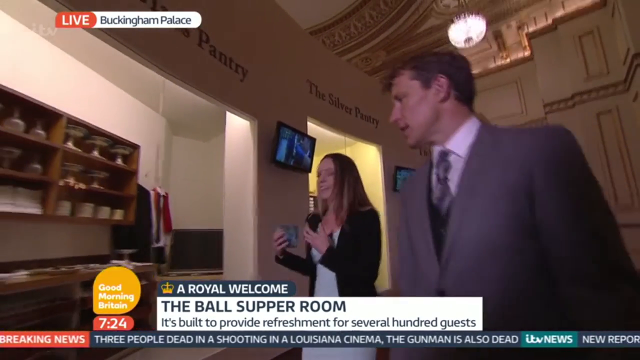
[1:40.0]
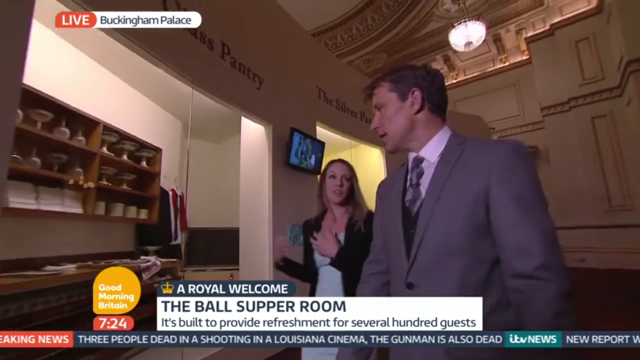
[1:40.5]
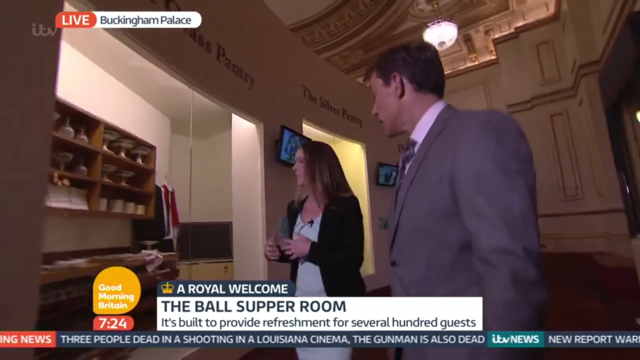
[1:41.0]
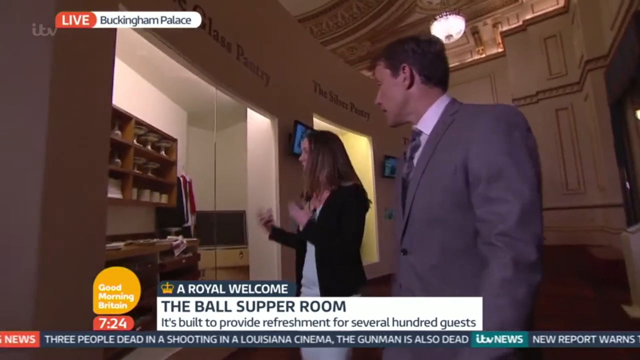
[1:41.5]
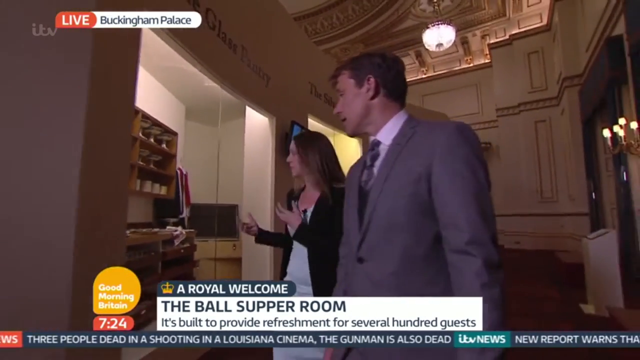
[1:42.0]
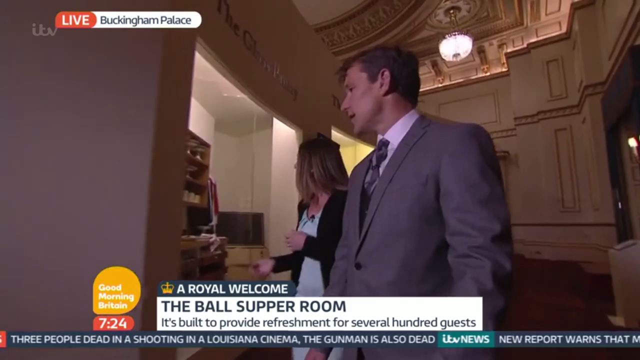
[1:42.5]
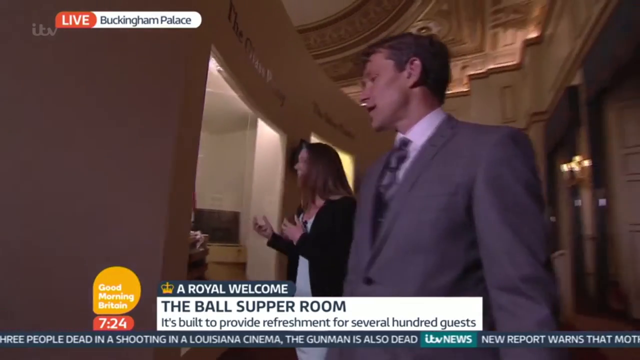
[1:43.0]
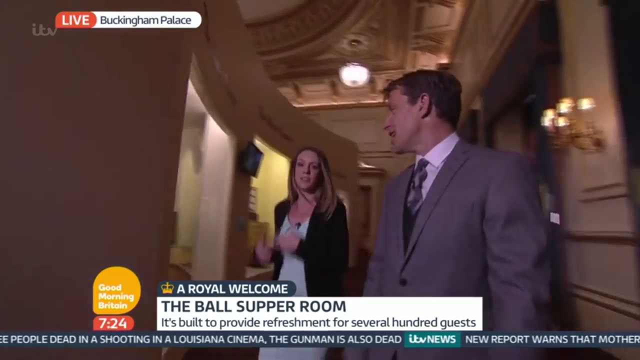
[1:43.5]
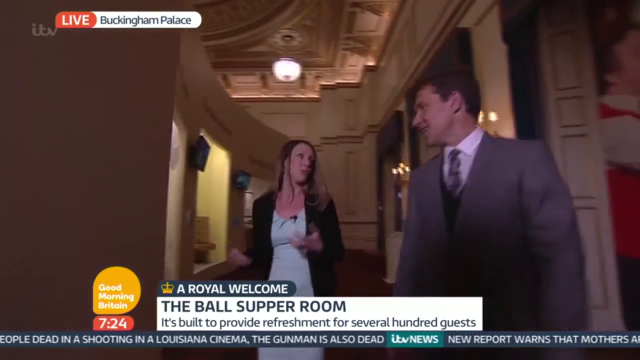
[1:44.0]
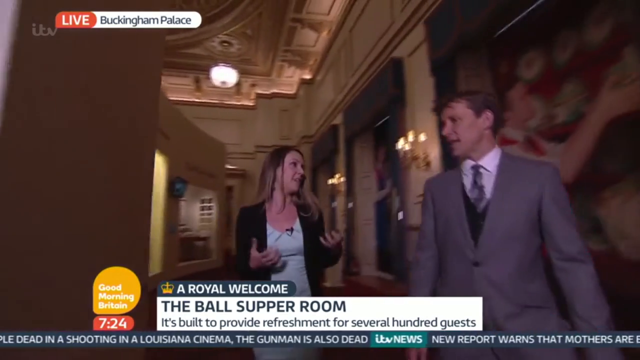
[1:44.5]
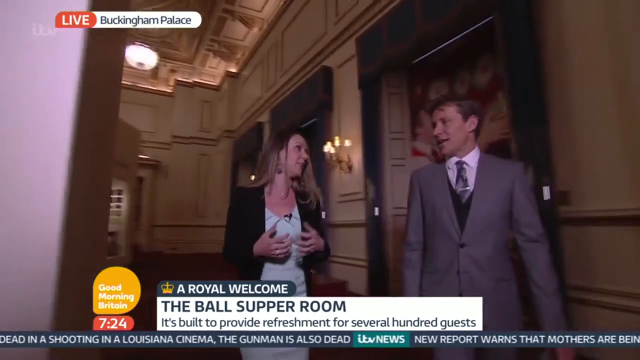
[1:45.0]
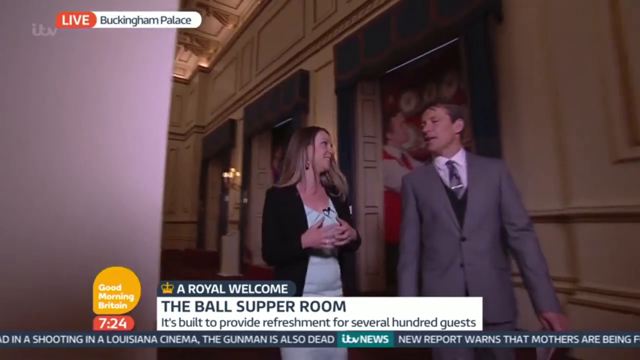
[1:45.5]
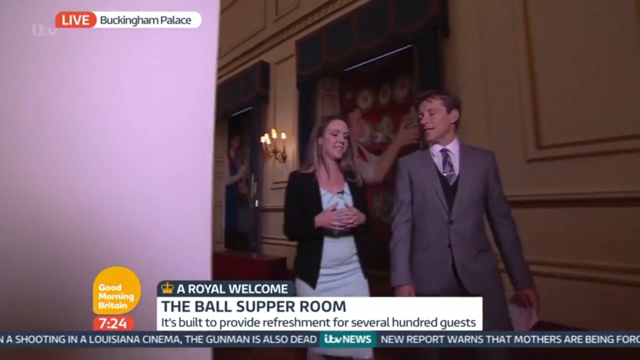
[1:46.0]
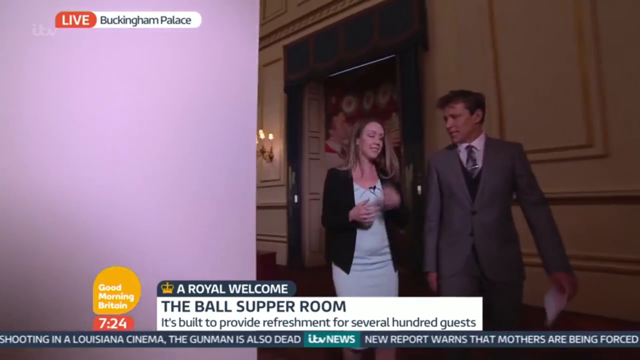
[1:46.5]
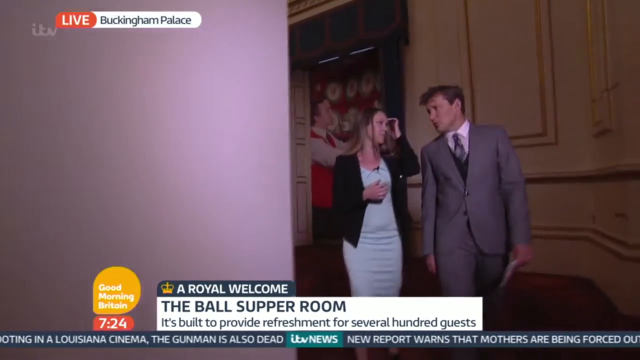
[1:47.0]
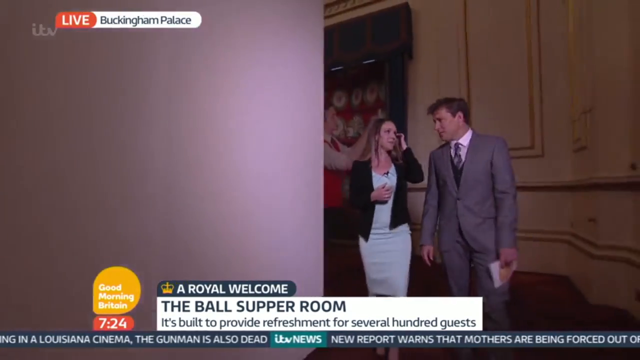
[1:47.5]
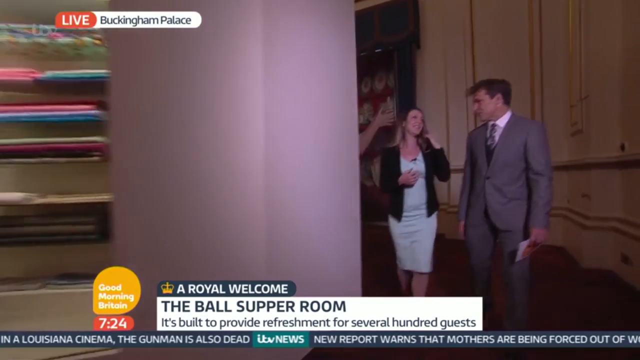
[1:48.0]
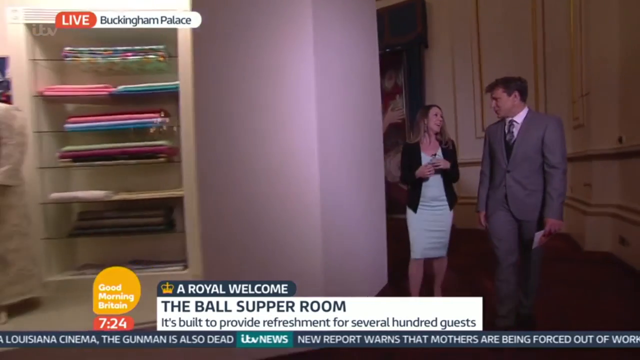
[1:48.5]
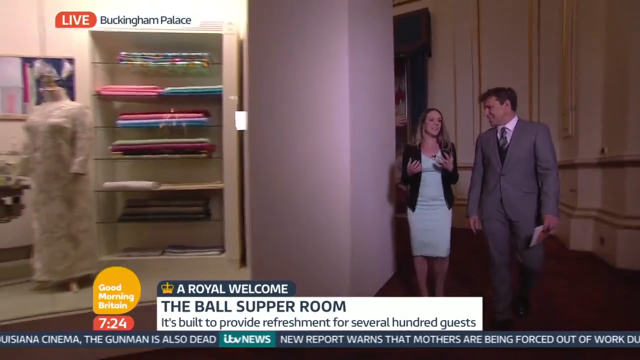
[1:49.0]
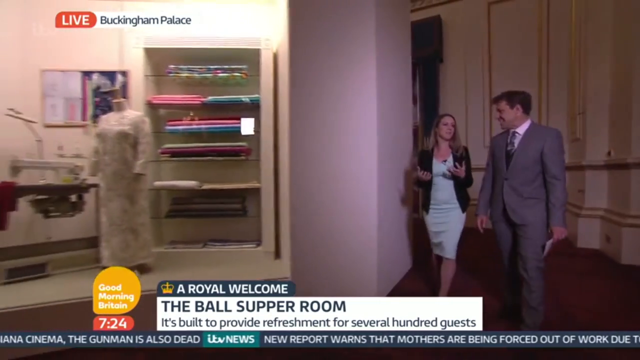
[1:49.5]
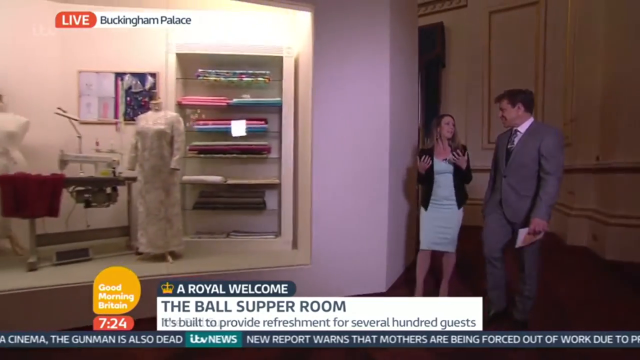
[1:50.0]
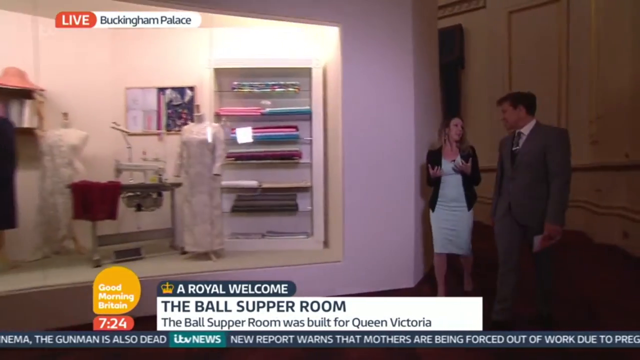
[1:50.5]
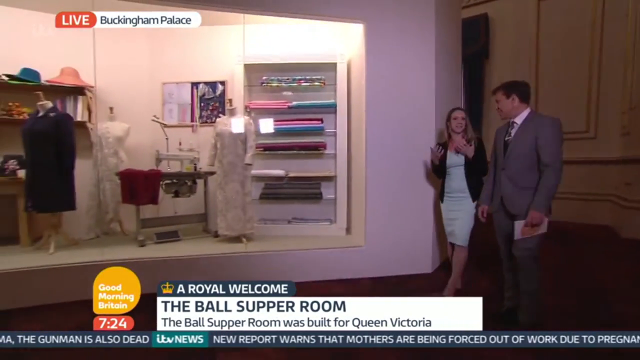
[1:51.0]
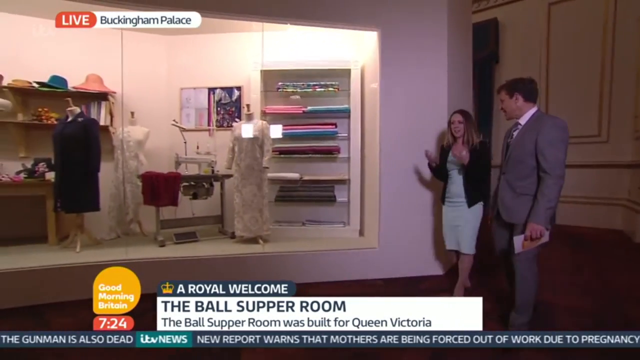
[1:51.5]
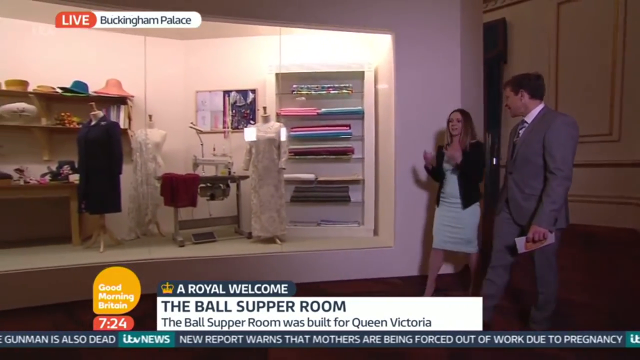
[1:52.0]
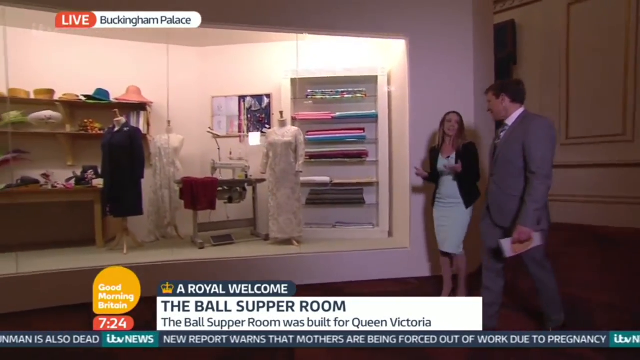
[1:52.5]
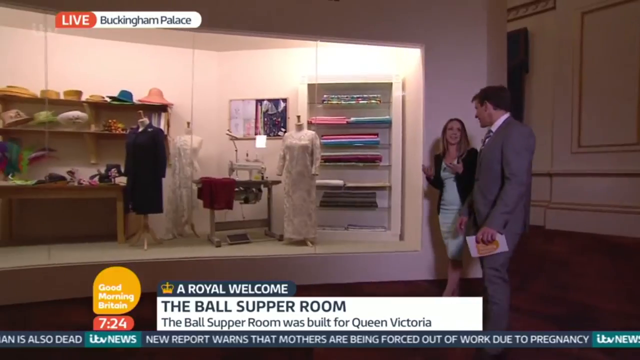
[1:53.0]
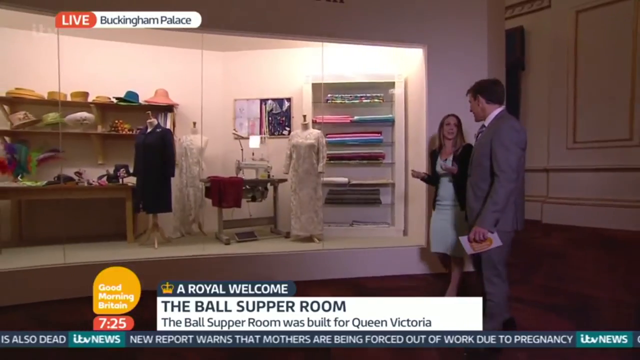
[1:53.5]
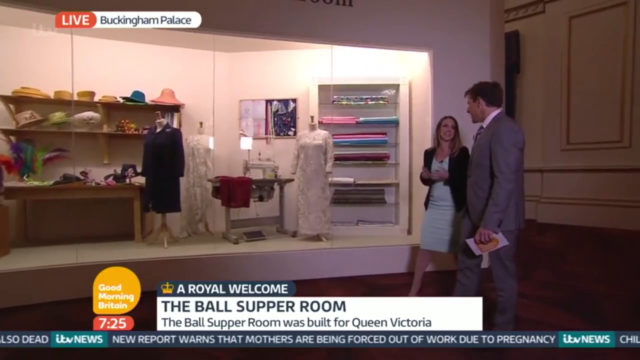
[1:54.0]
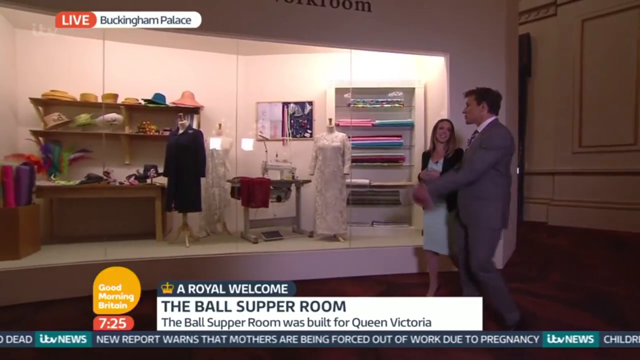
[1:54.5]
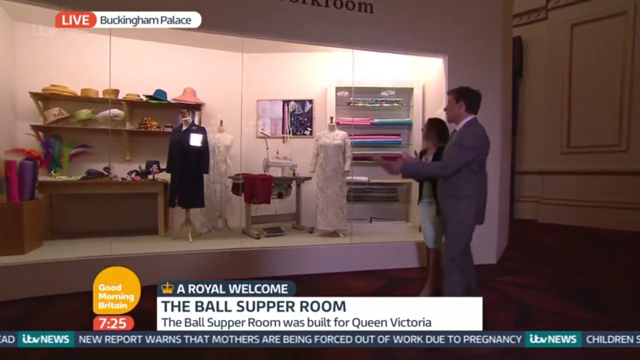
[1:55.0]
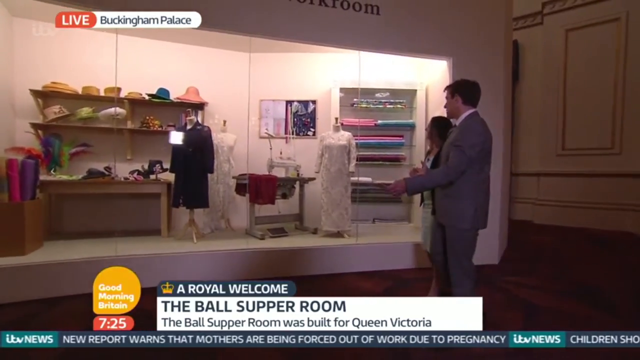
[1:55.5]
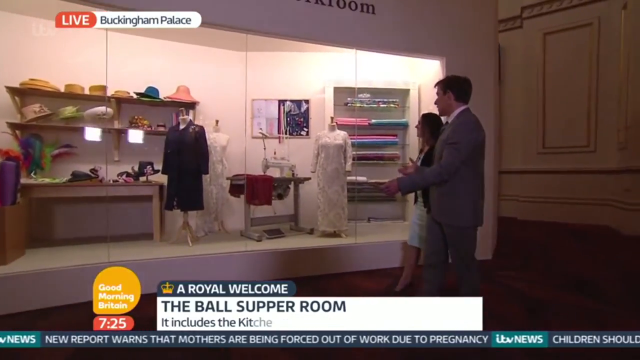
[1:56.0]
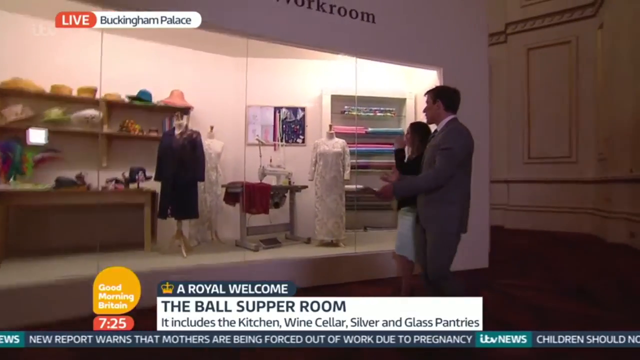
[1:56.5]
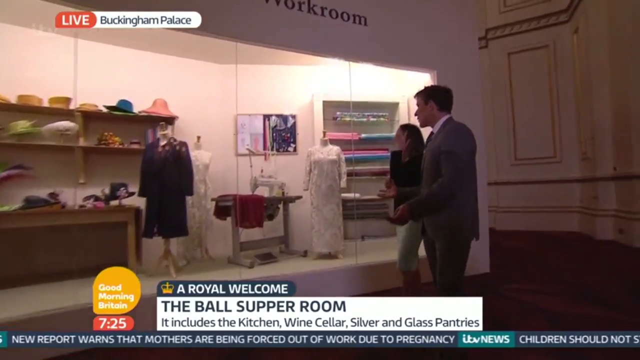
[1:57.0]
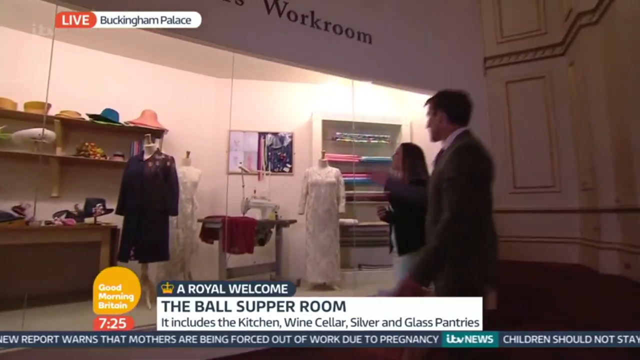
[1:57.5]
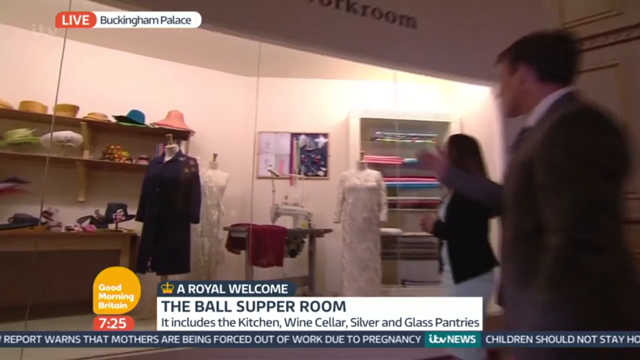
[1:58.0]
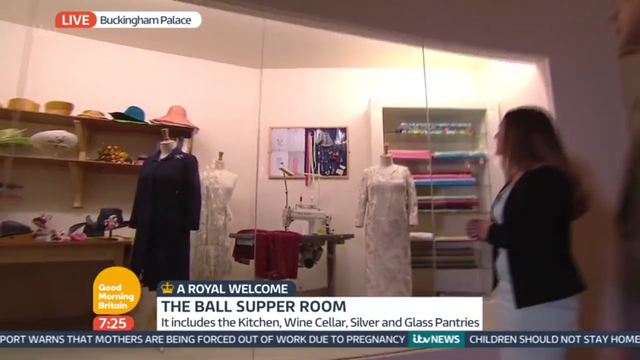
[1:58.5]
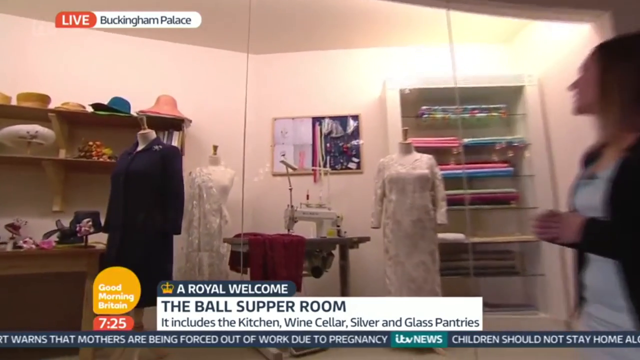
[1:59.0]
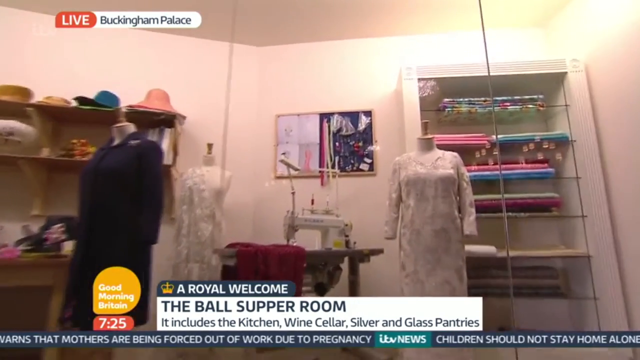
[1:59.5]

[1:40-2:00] In the lower left is an orange bubble with the words "Good Morning Britain", and below it the time "7:24" in a red balloon. To the right, a white rectangle reads "The Ball Supper Room" with, below it, "built to provide refreshment for several hundred guests". Above it is a smaller blue curved rectangle with a yellow drawing of the British crown on the left and the words "A Royal Welcome" to the right. In the top left, a curved rectangle reads "Live Buckingham Palace". The man, on the right, wears a gray suit, white shirt and gray tie, and walks with the woman on his left, who wears a white dress with a black coat over it. As the woman talks, she slightly rolls her hands forward in front of her chest with her palms facing her body. They stand in front of a museum exhibit with the words "The Glass Pantry" at the top, and to the right is another exhibit whose windows are visible. In front of The Glass Pantry, the woman looks to her right and gestures toward the museum exhibit with a window, behind which are a brown desk and brown shelves above it. She looks back and pushes her hands forward near the exhibit as they walk forward, then turns around and continues walking. On the other side of the exhibit, in an area that looks like a palace, large pictures on the wall appear to be of different chefs. The two walk around a corner, the man looking at and talking to the woman. The woman brushes the hair on her left side behind her ear with her left hand, then continues talking with her hands in front of her chest, rolling them forward, palms facing the ceiling and fingers slightly curled. They reach a large exhibit in front of them, slightly to their right.